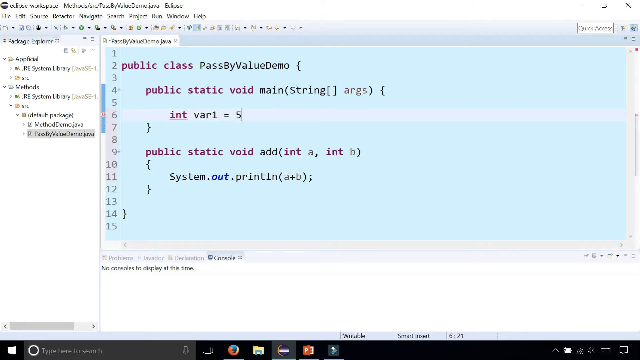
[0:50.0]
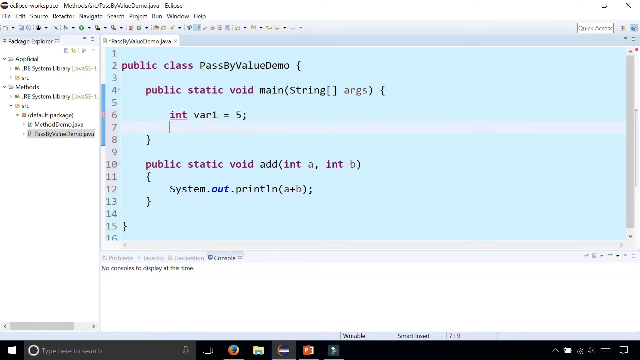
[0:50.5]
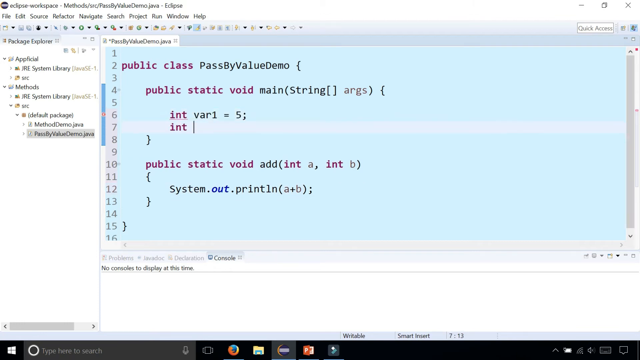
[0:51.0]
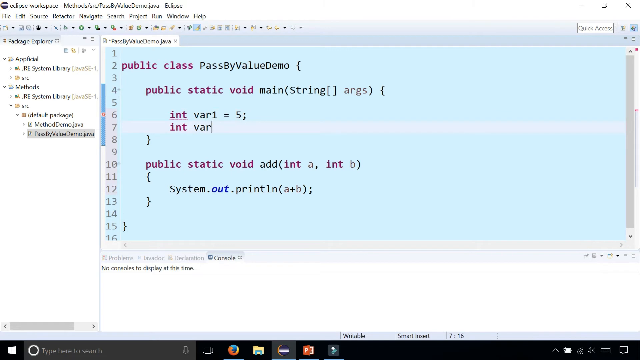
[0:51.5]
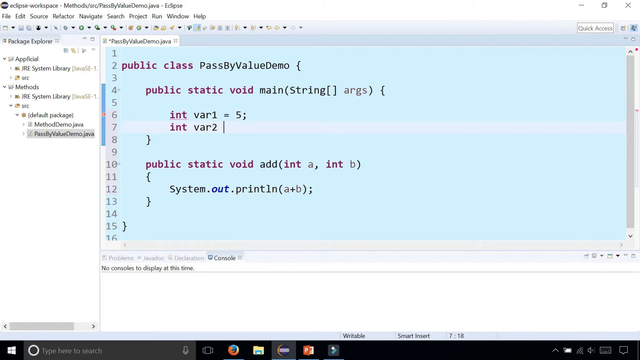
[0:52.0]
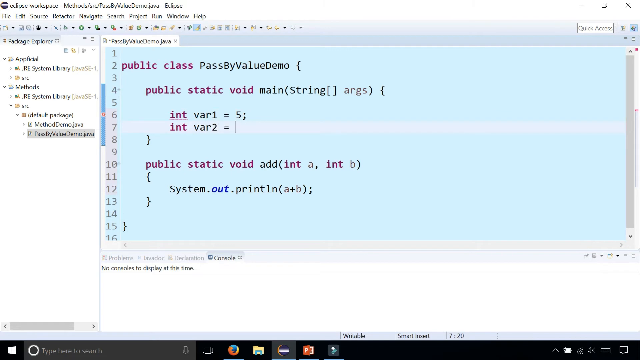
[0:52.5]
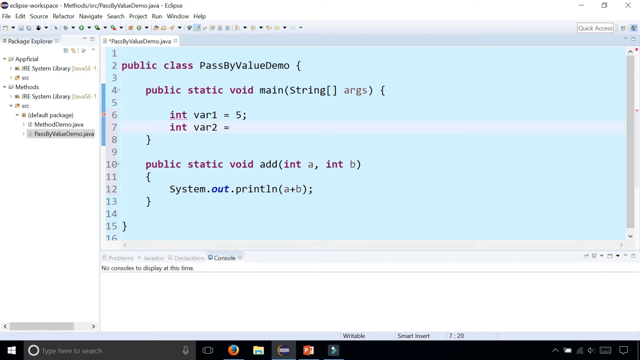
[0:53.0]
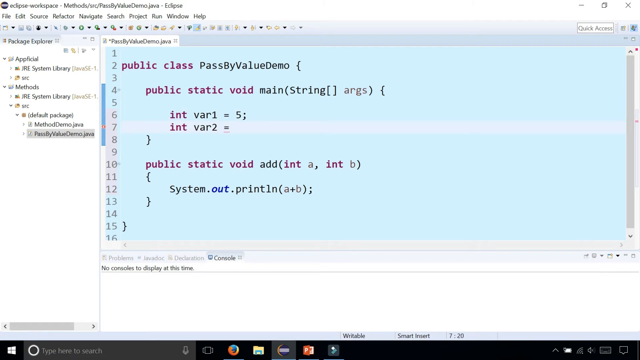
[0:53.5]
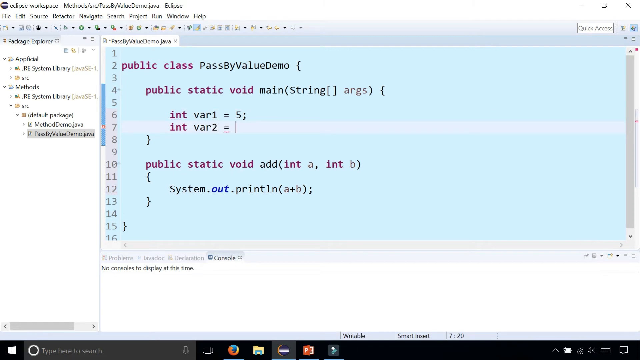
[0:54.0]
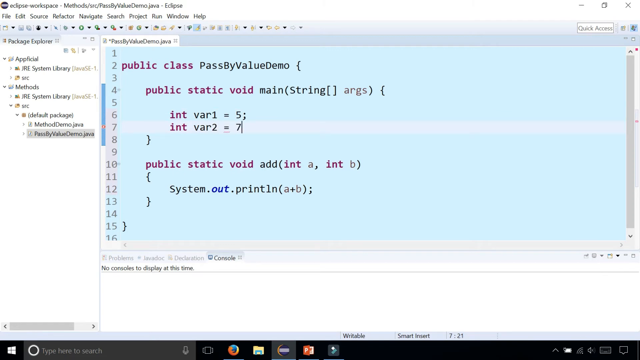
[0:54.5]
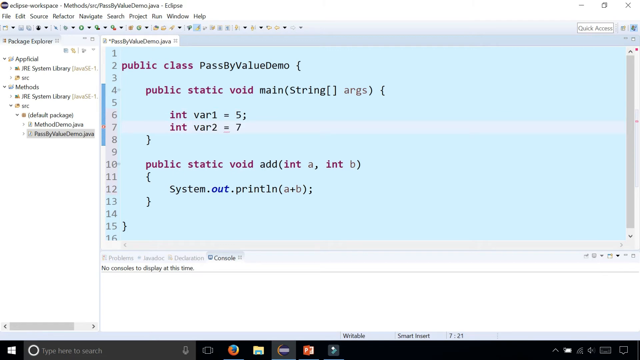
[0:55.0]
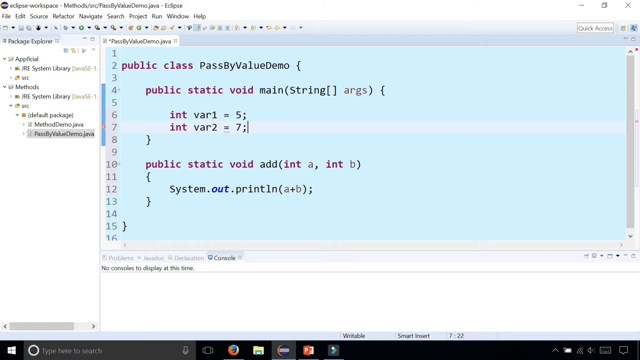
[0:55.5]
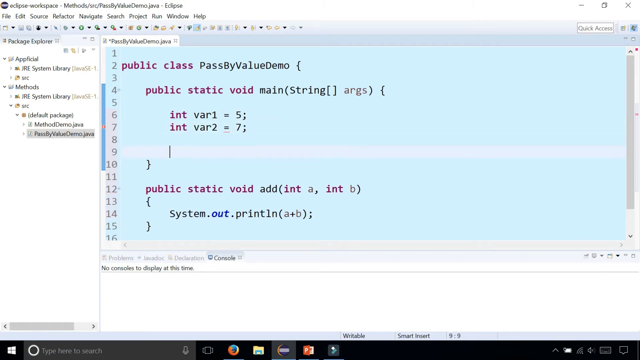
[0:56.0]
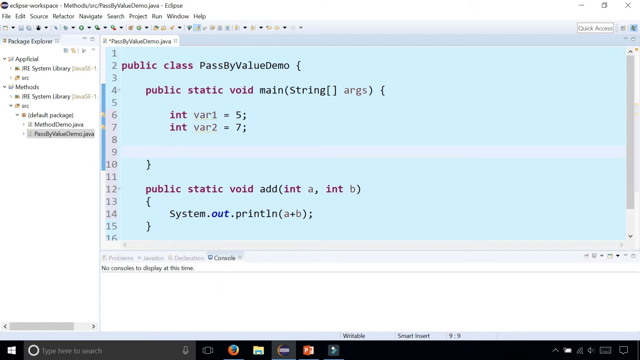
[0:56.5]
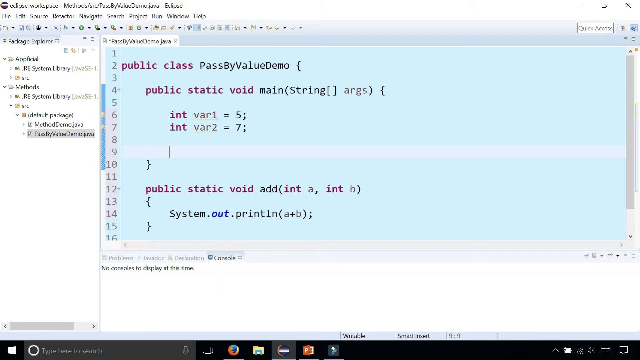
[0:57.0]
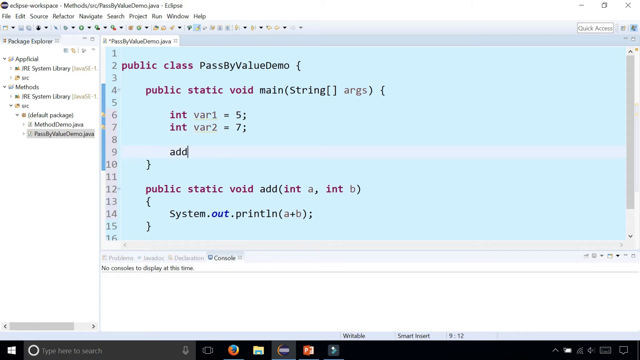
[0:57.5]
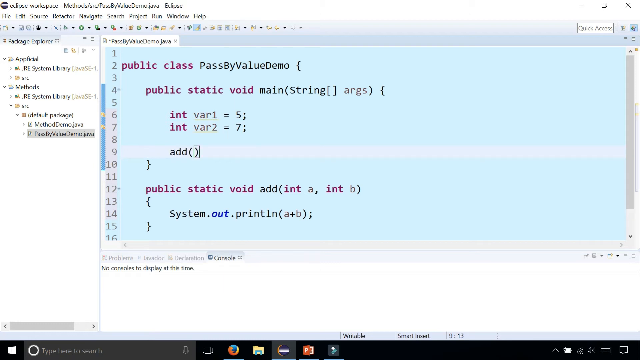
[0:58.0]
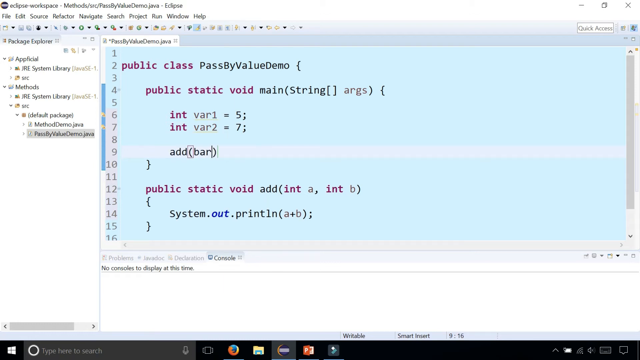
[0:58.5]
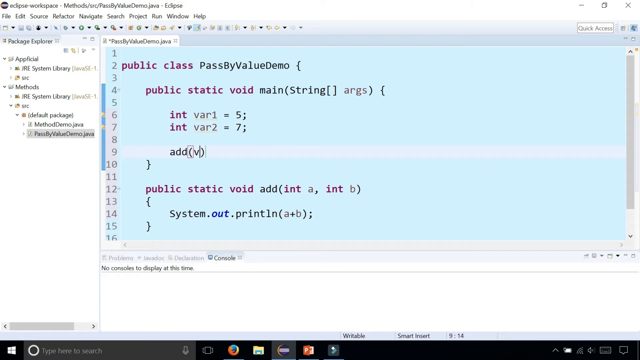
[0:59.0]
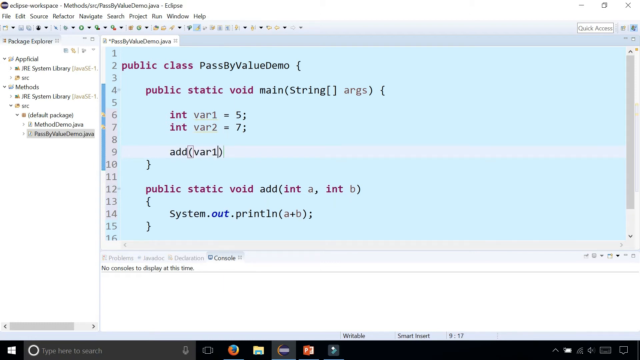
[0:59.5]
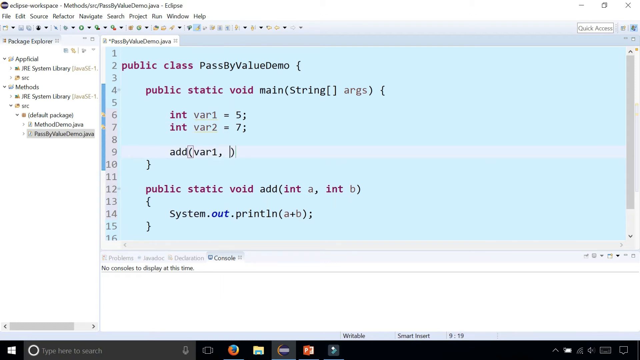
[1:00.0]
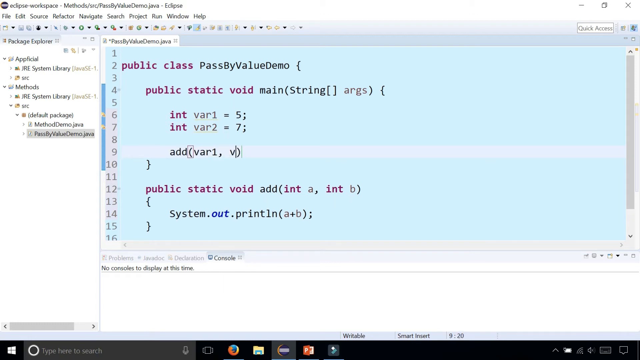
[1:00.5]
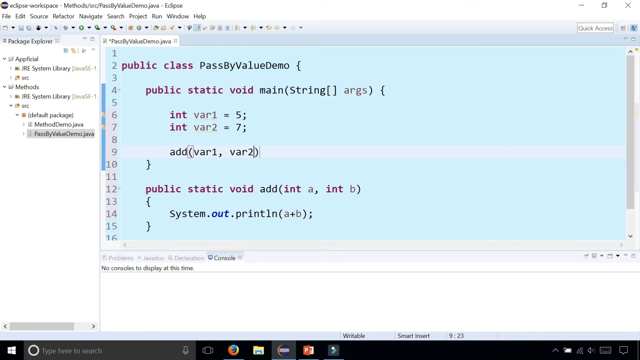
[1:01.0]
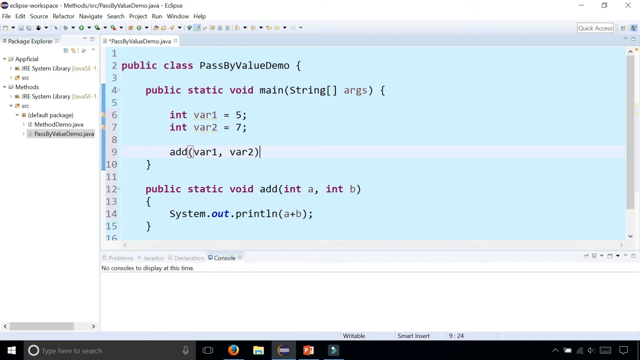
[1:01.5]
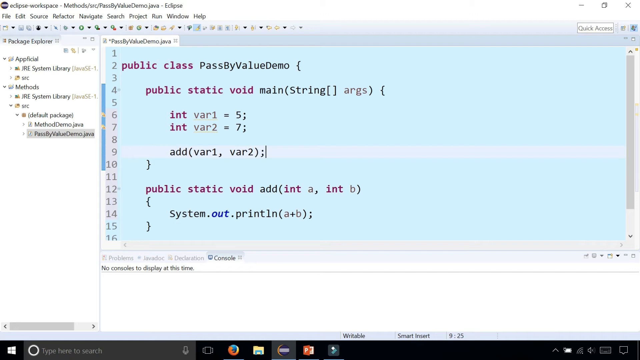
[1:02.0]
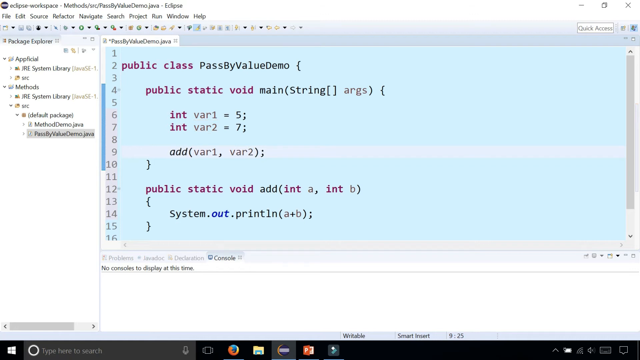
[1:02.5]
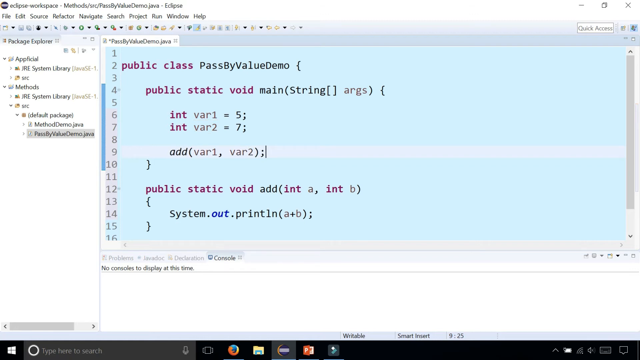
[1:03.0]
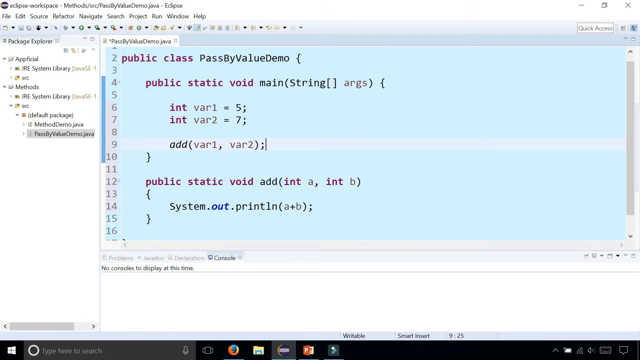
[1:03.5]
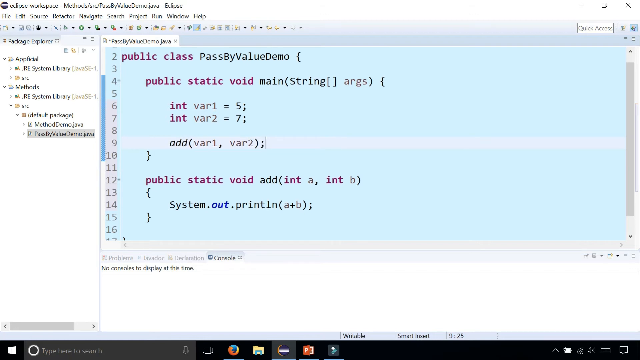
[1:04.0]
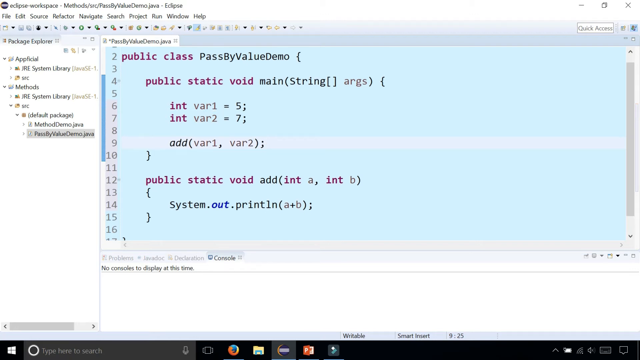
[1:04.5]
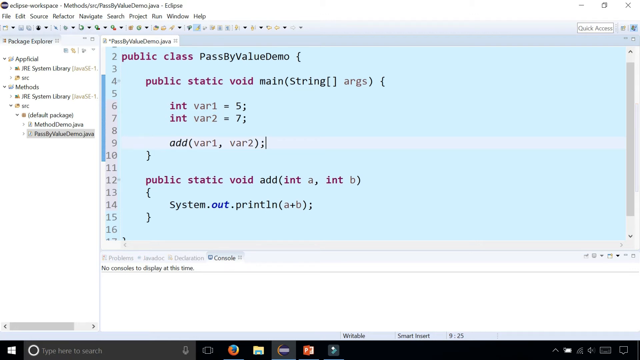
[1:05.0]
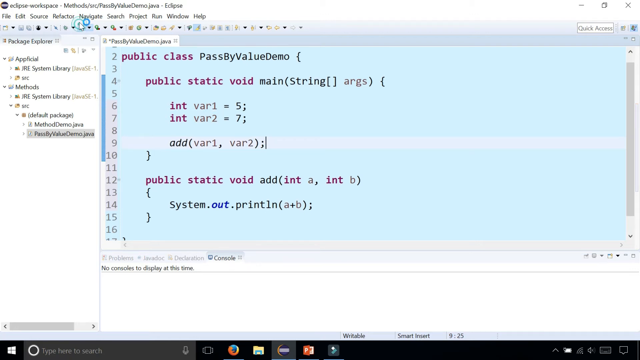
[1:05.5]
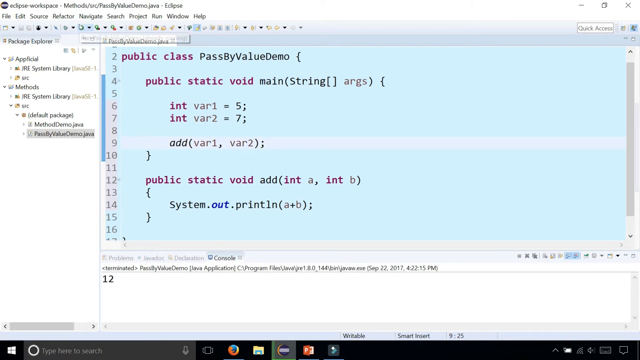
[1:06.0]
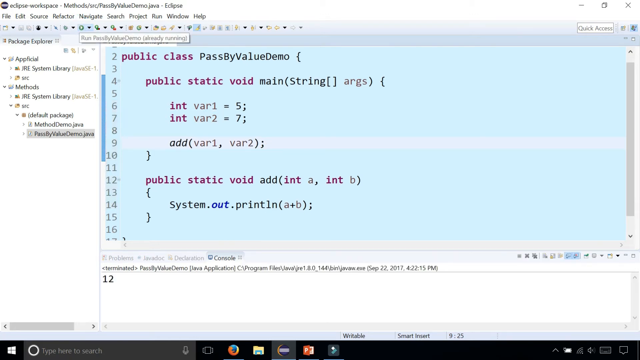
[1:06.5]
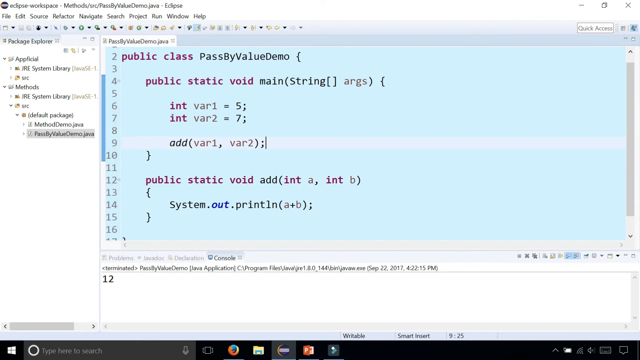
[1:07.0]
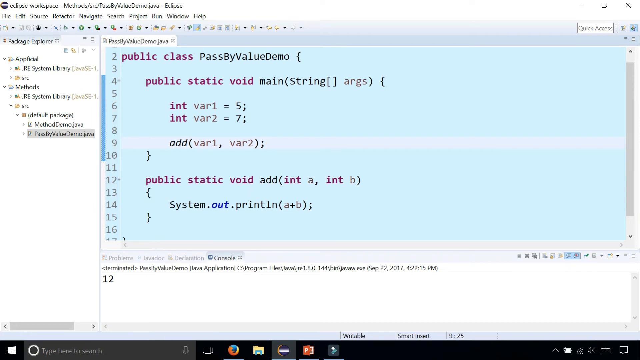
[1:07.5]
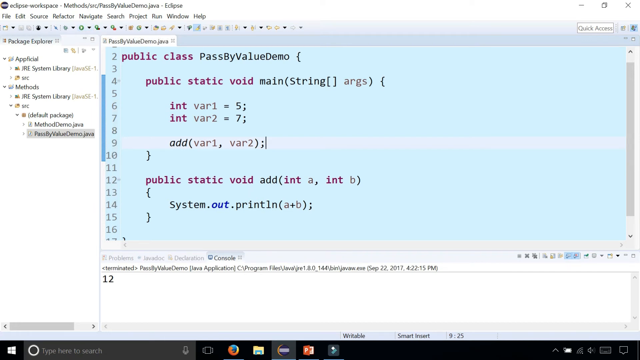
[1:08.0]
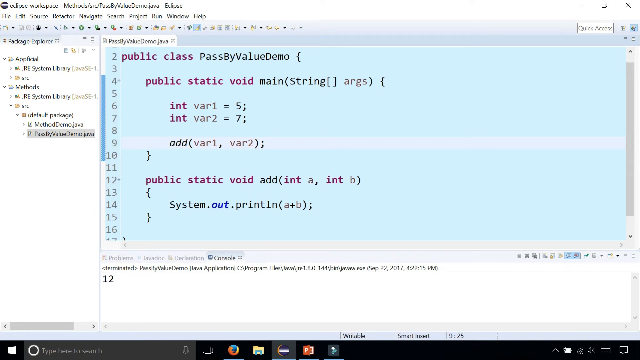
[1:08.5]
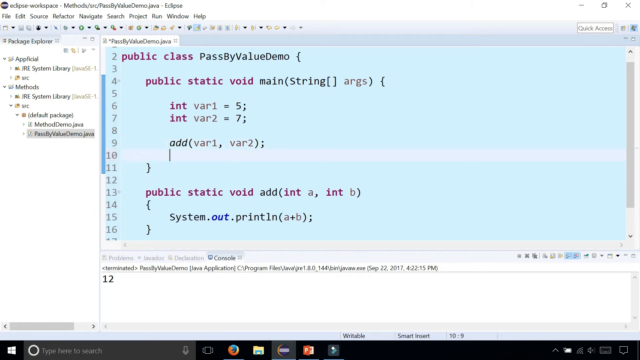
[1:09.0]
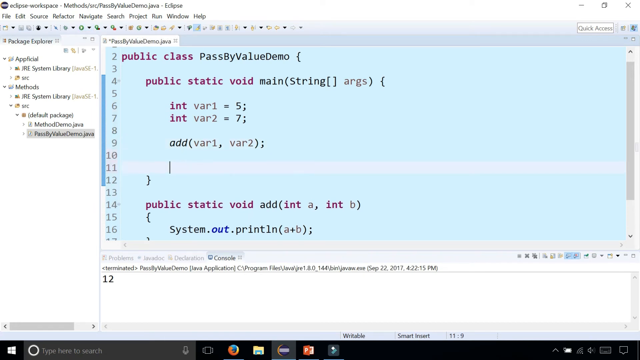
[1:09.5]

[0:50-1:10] The screen shows a program called Eclipse Workplace, with the menus File, Edit, Source, Refactor, Navigate, Search, Project, Run, Window, Help across the top and a menu tree along the left side. In the middle is a box with lines numbered 1 to 15 vertically on its left, containing the code public class PassByValueDemo, public static void main(String[] args), int var1 = 5;, public static void add(int a, int b) and System.out.println(a + b);. This center screen is green. Another screen at the bottom is called Console, and "Quick Access" appears across the top. Someone types int var2 = 7; and add(var1, var2); into the center screen, then clicks a little green button with a dropdown arrow at the top.